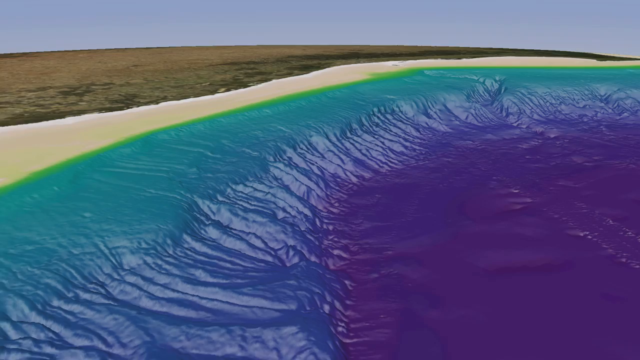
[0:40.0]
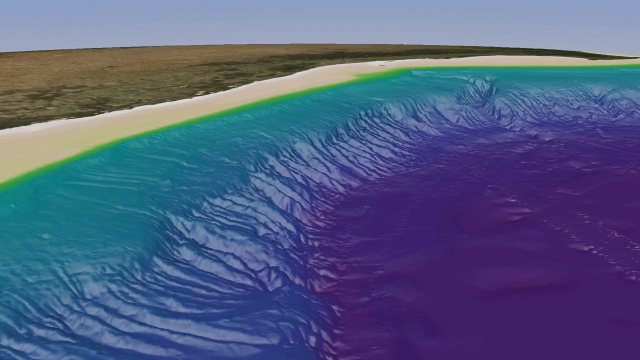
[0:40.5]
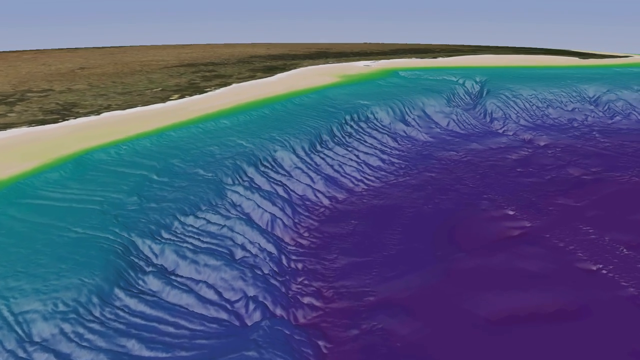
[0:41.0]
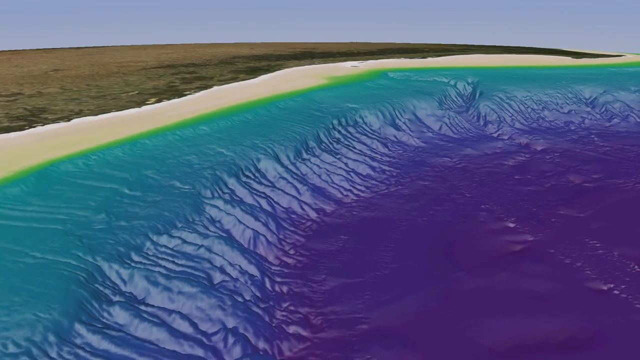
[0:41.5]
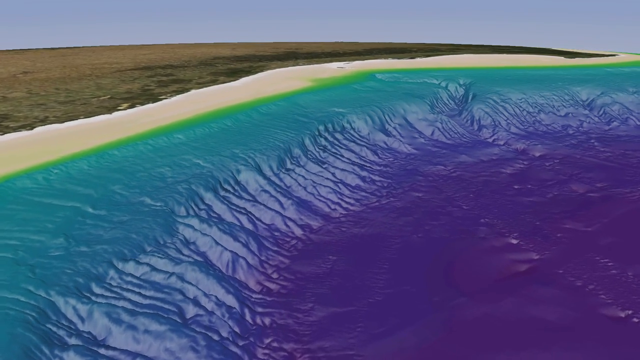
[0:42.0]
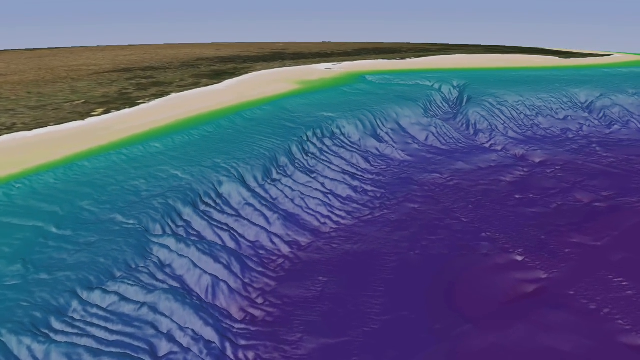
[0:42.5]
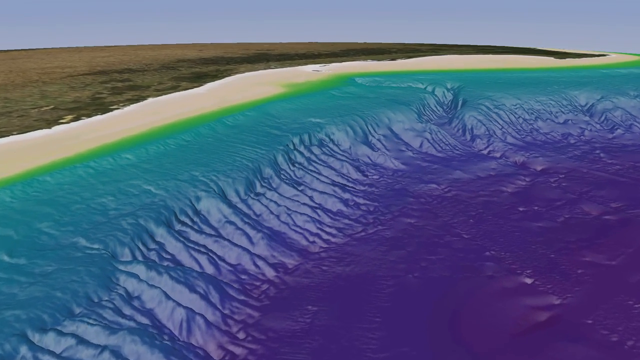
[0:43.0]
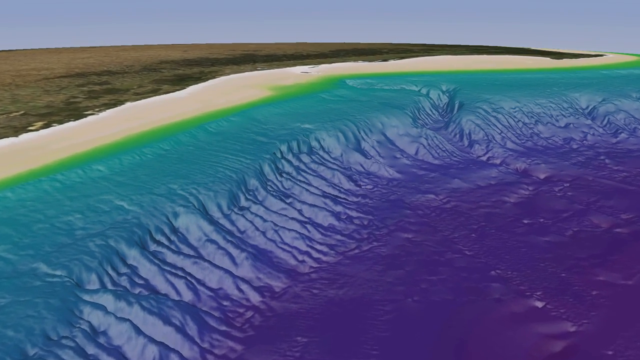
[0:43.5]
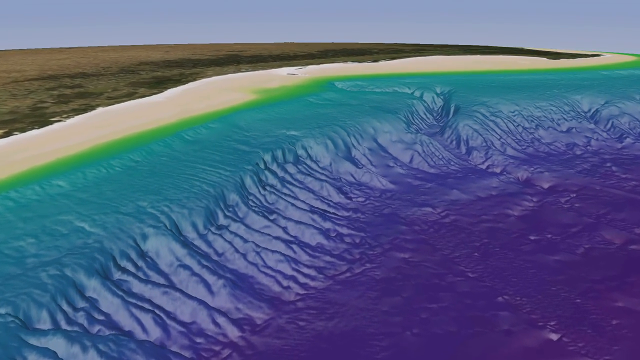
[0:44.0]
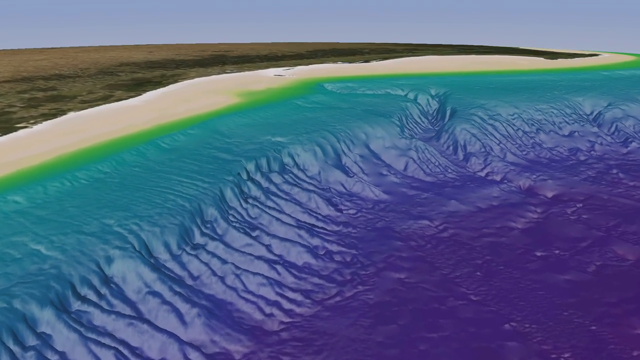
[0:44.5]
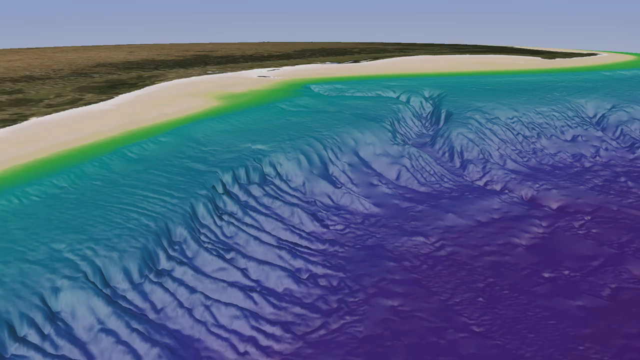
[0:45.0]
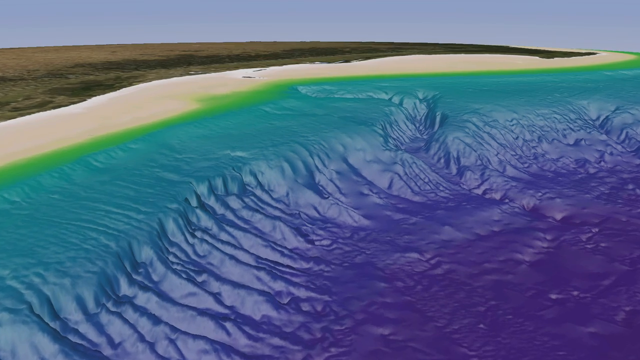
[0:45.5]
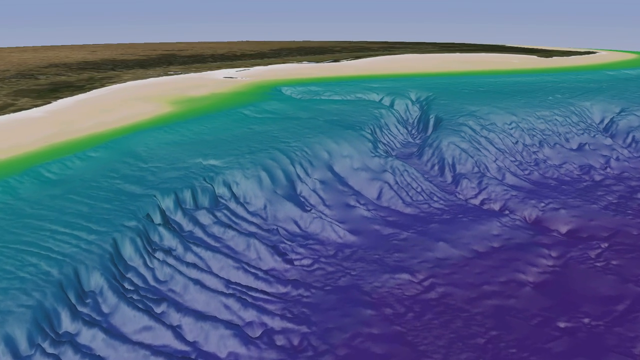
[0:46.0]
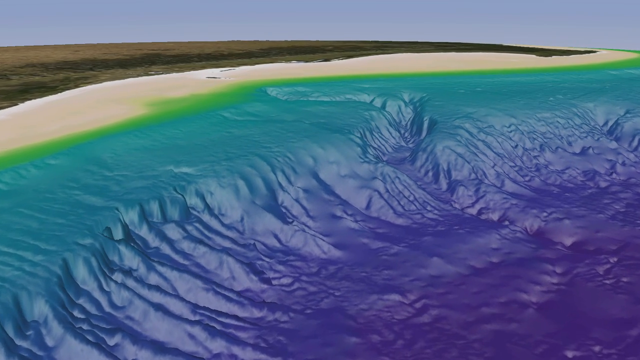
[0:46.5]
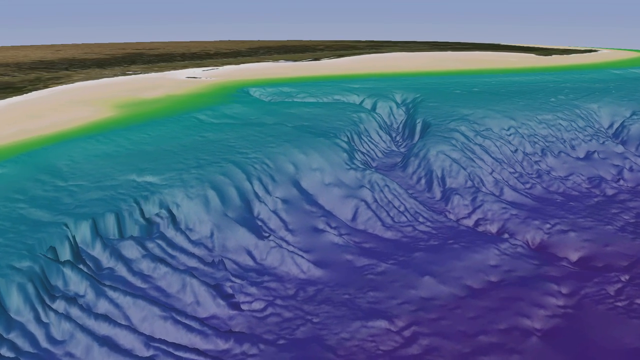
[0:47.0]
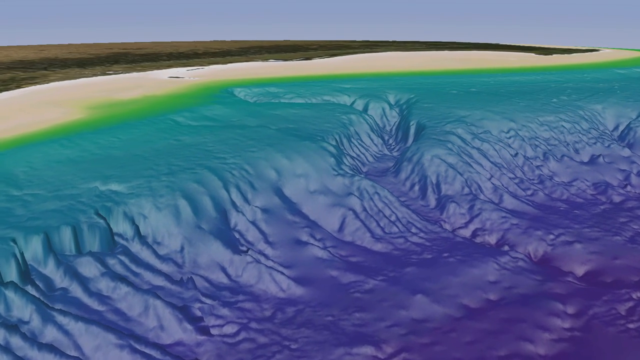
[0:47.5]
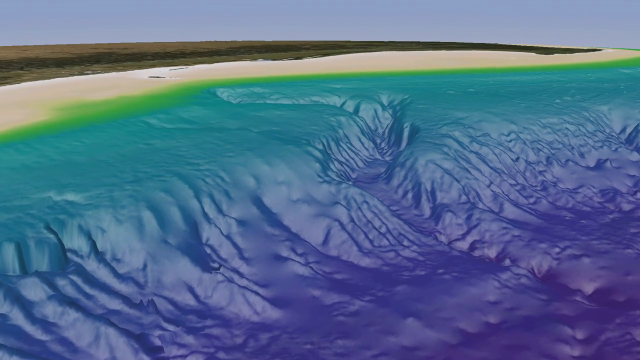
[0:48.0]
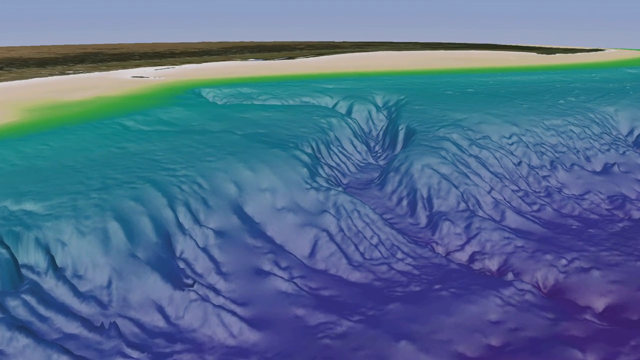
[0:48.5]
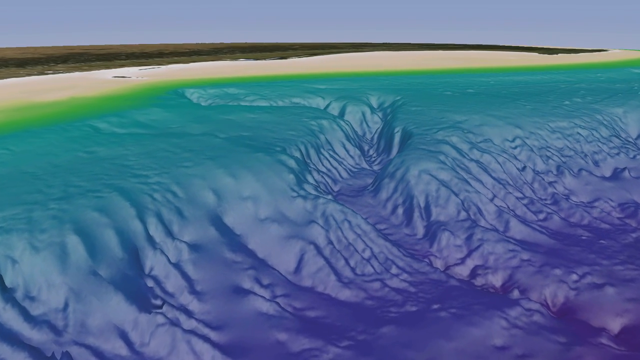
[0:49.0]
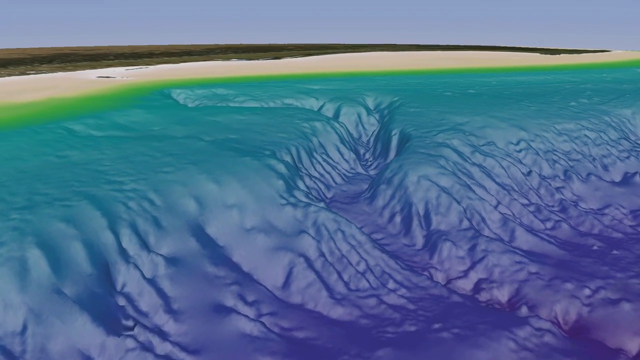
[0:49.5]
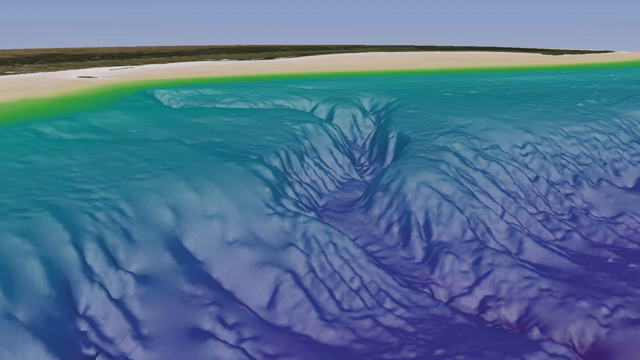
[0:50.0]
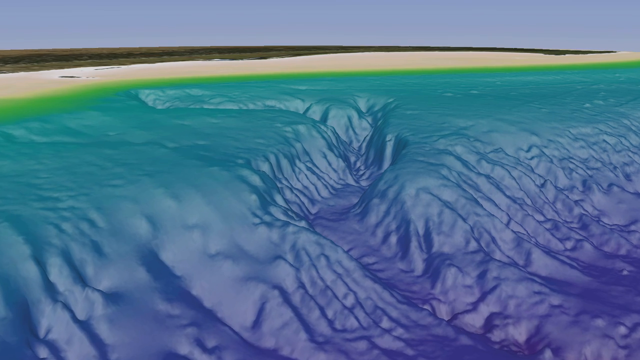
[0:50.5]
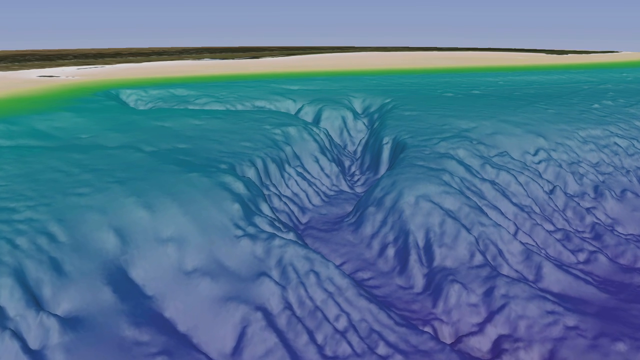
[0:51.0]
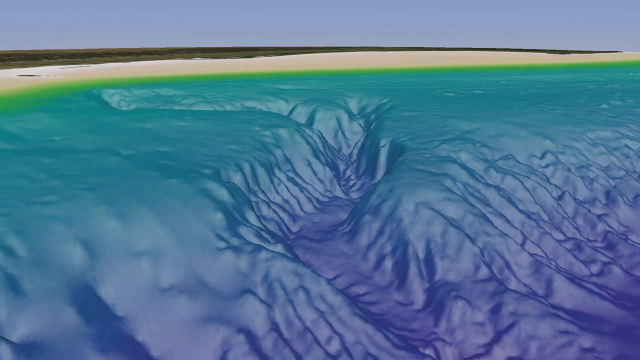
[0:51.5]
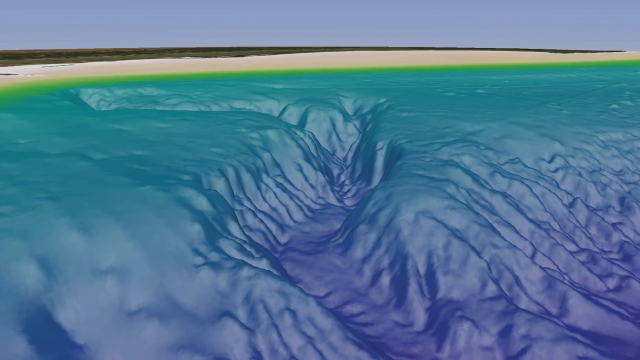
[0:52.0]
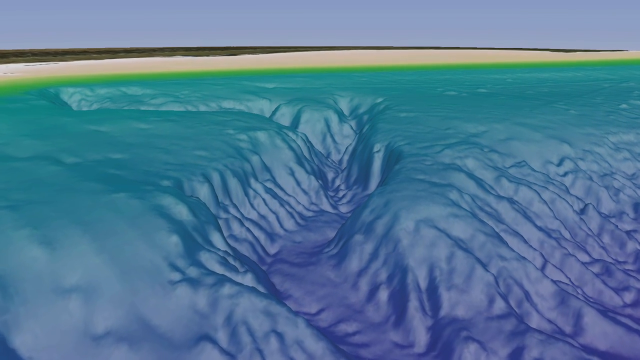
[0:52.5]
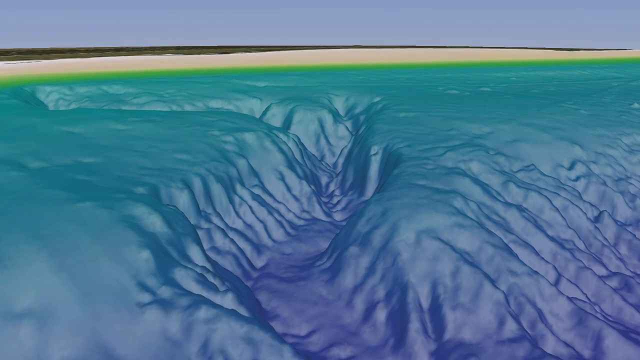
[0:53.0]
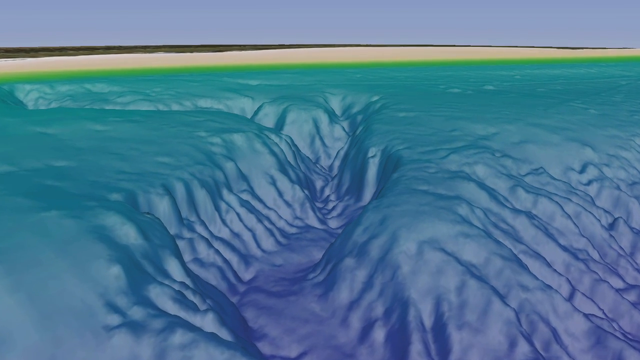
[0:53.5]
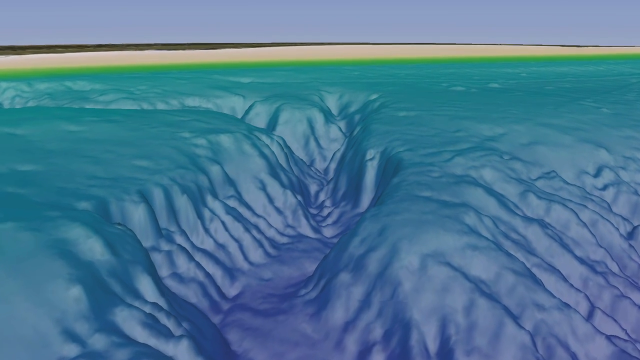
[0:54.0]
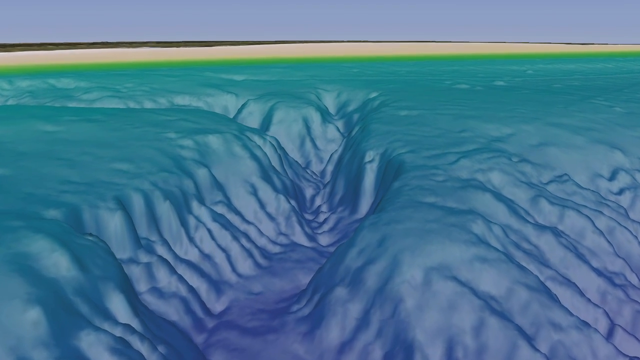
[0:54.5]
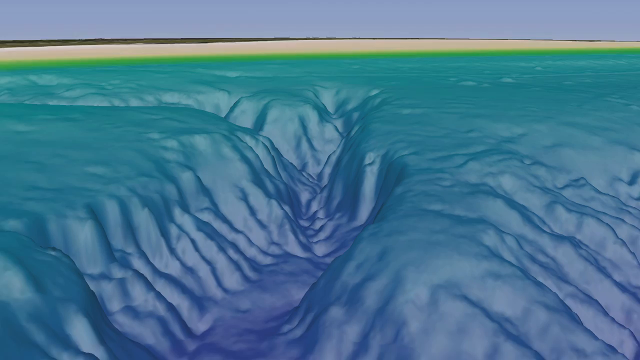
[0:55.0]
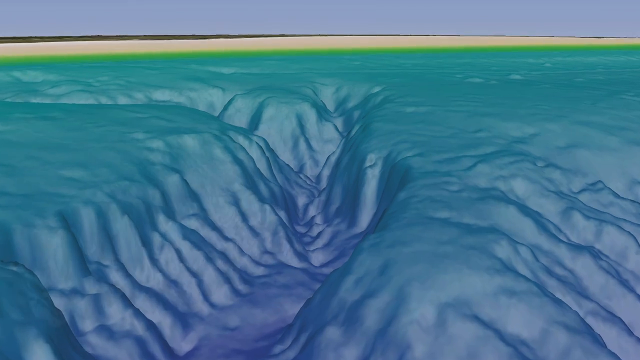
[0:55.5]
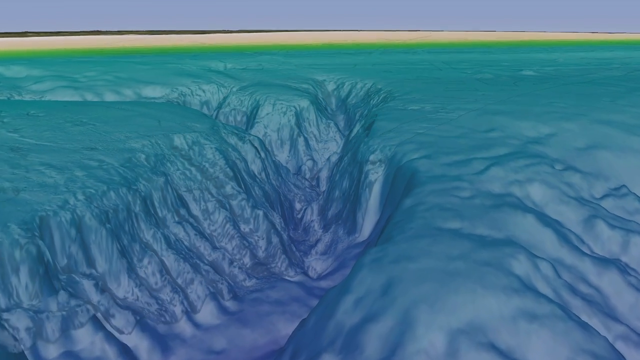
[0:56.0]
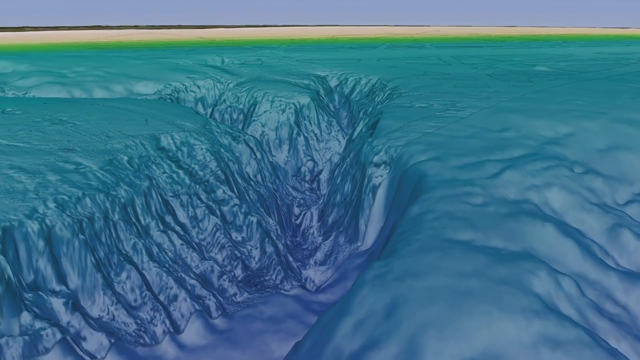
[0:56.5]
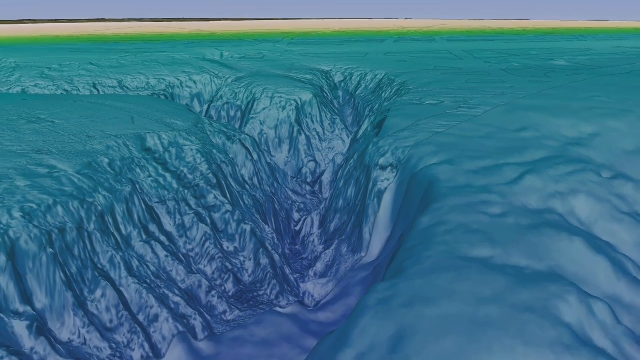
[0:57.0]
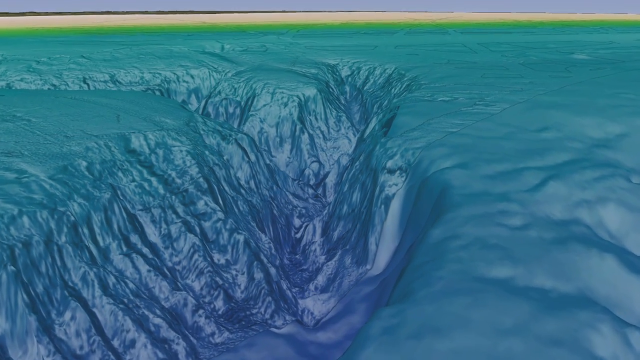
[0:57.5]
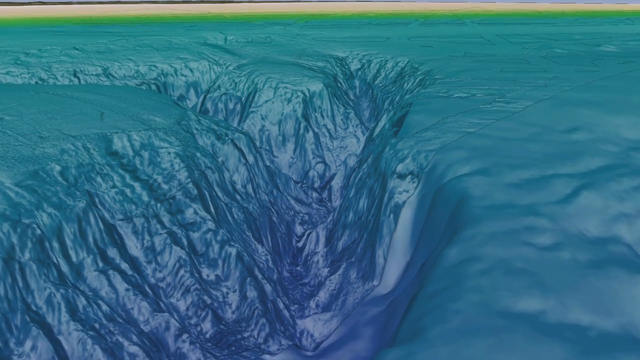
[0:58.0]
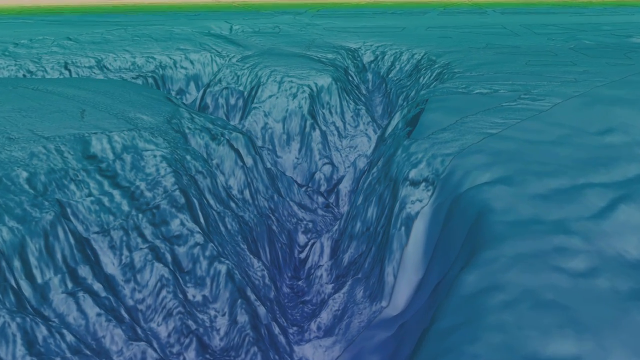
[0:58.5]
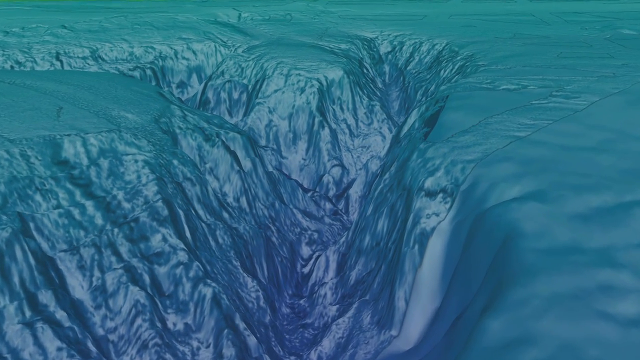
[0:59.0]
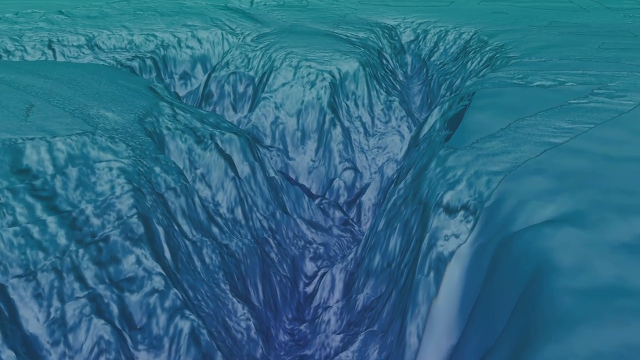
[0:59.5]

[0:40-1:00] Blue, green, brown, yellow and purple appear somewhat mixed together, with purple the dominant color. It is unclear whether the surface is land or water. There is something like a blue sky in the shot as well. Texture is visible in the blue, especially various ridges, and it looks somewhat like ice. A little cavern appears inside, a small canyon-type indentation, and the camera seems to zoom into it. There are many ridges, and as the camera zooms in further, the area looks somewhat like a canyon with trenches and valleys.